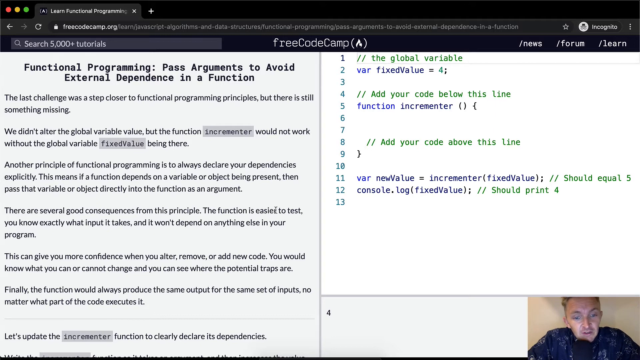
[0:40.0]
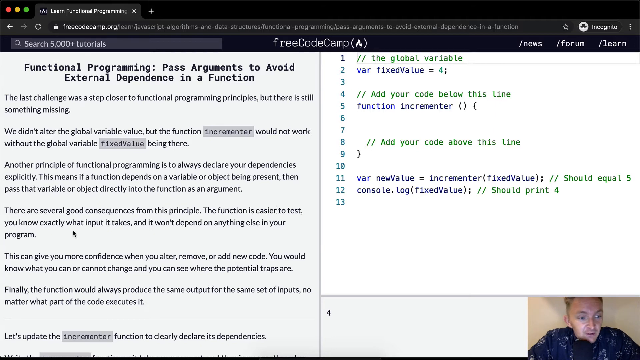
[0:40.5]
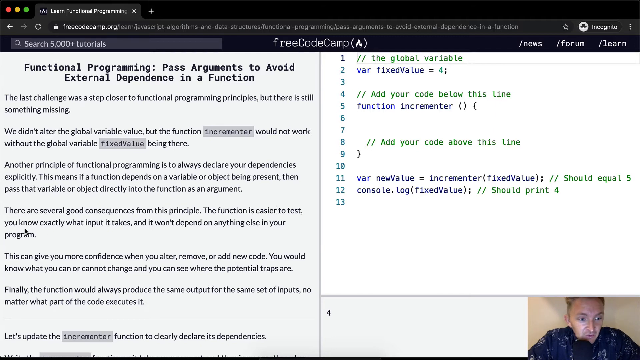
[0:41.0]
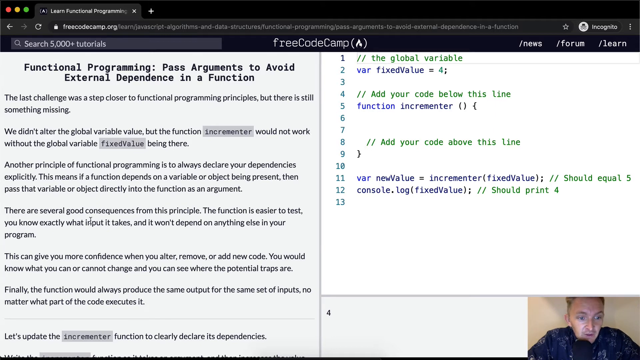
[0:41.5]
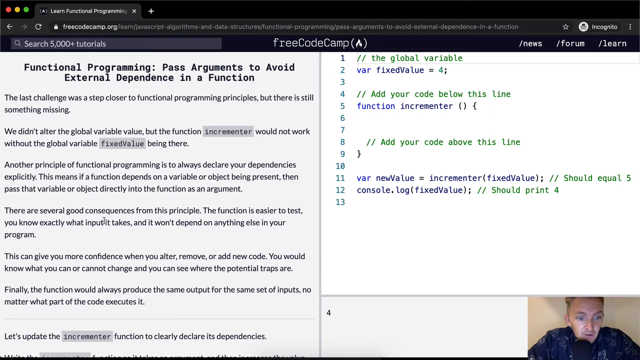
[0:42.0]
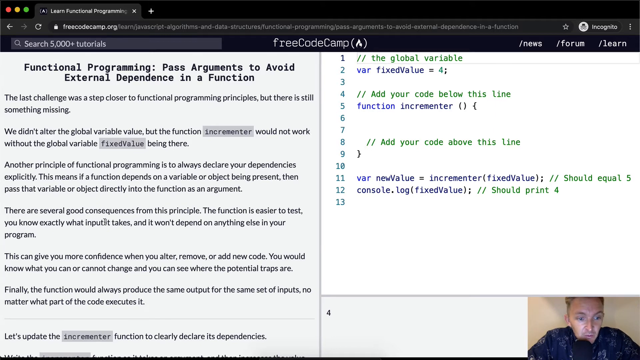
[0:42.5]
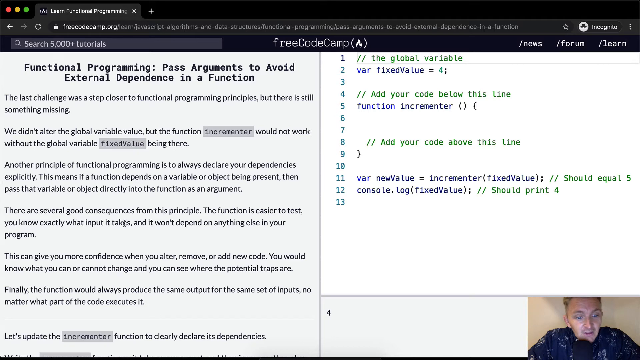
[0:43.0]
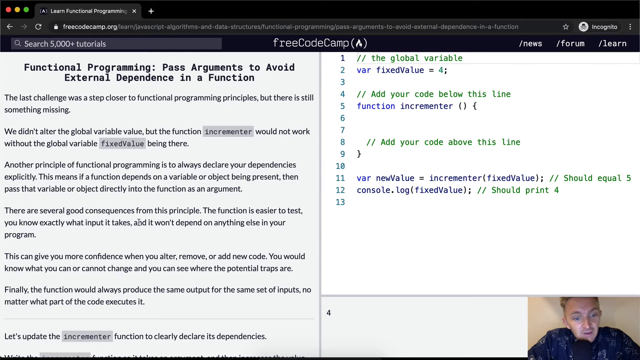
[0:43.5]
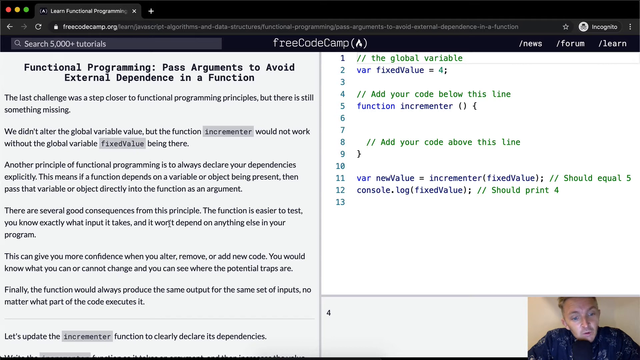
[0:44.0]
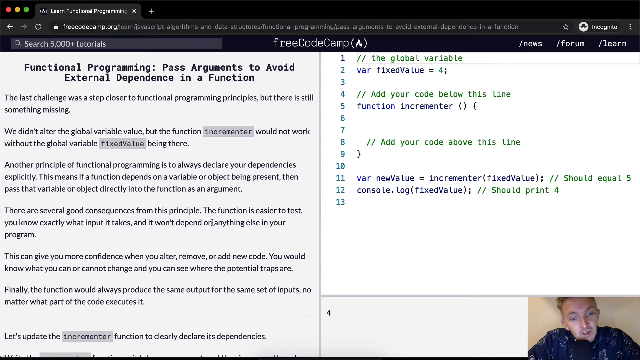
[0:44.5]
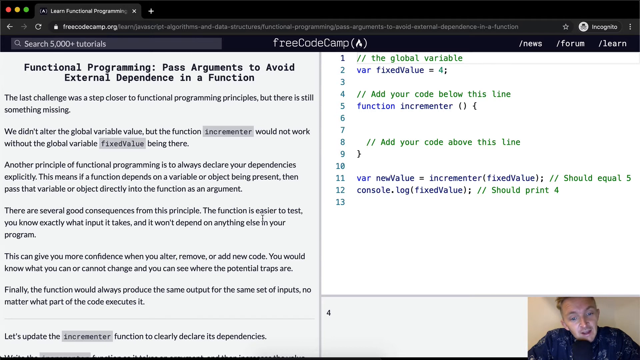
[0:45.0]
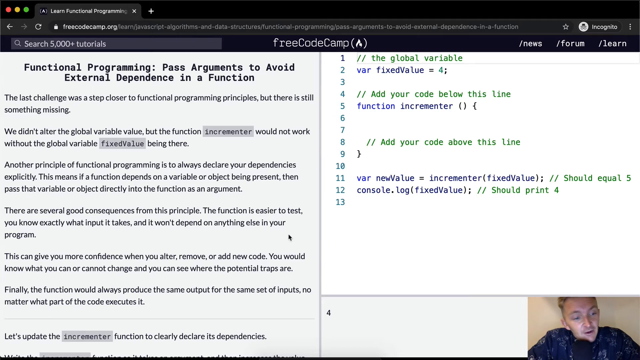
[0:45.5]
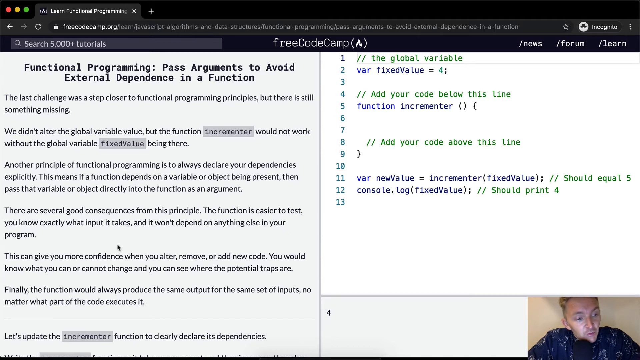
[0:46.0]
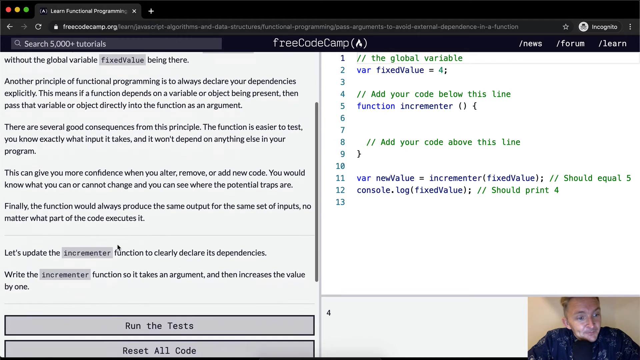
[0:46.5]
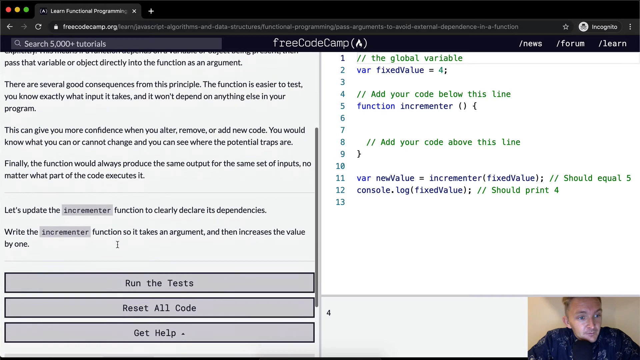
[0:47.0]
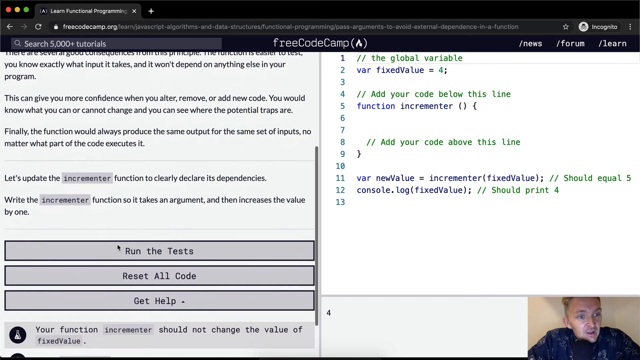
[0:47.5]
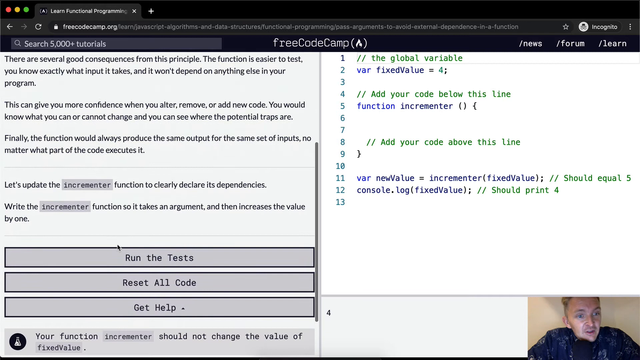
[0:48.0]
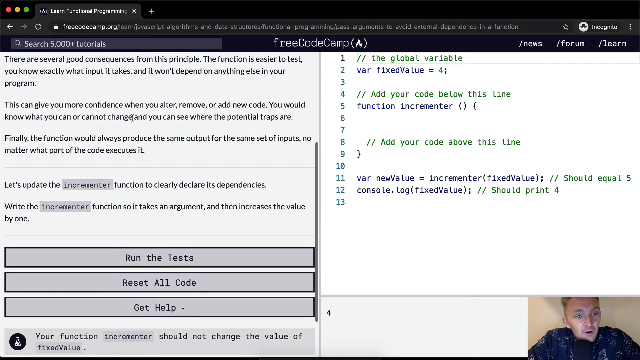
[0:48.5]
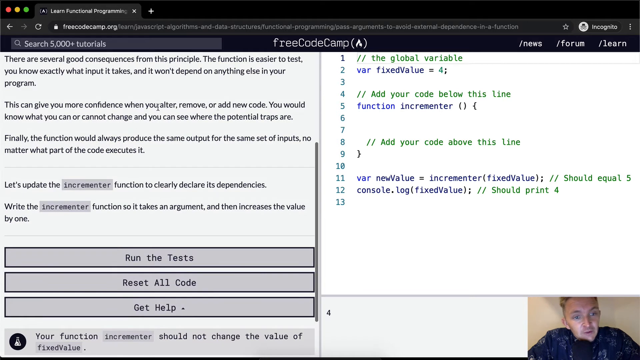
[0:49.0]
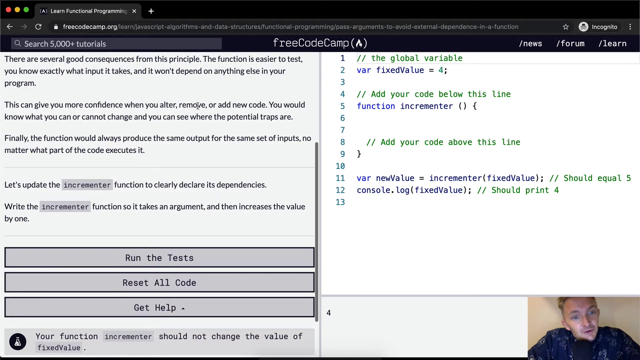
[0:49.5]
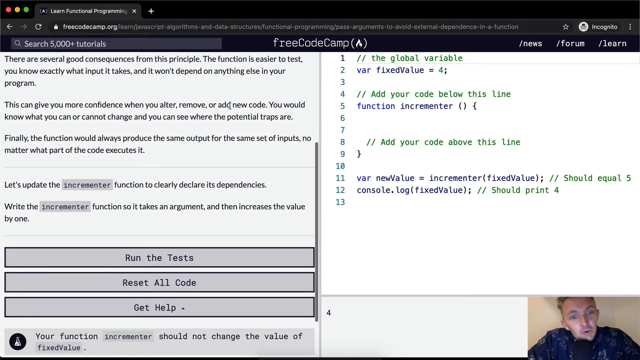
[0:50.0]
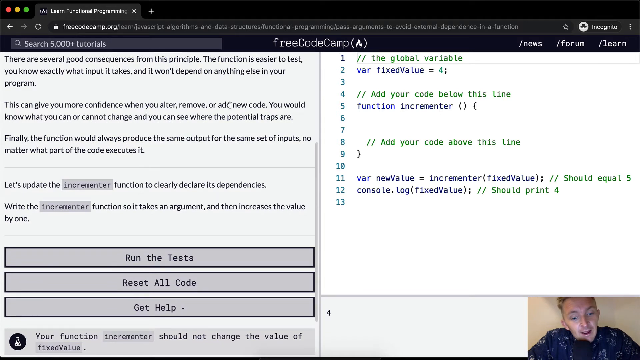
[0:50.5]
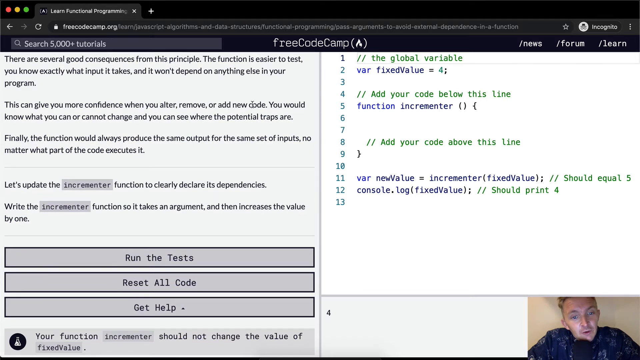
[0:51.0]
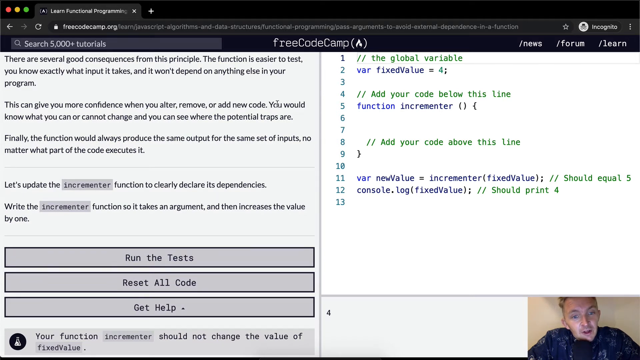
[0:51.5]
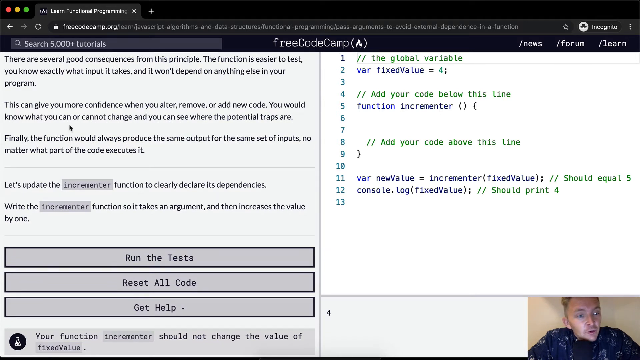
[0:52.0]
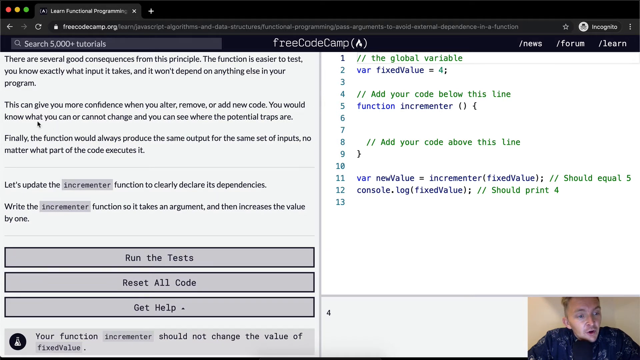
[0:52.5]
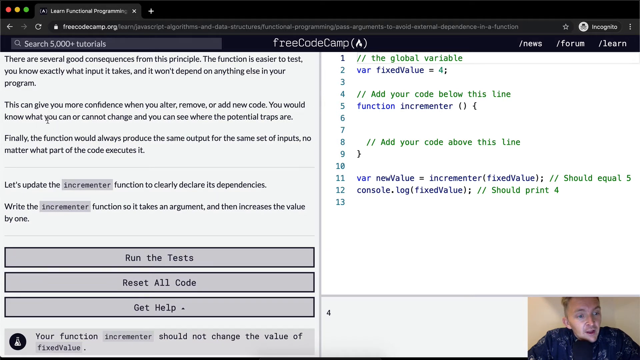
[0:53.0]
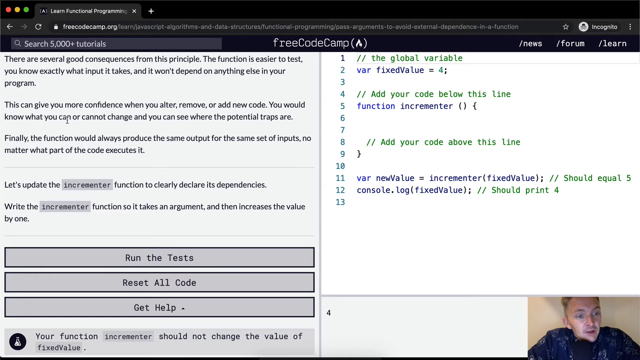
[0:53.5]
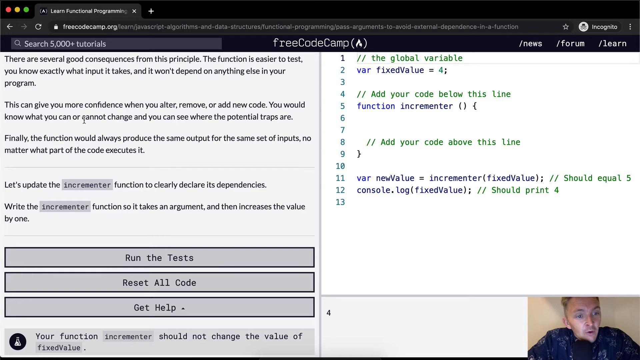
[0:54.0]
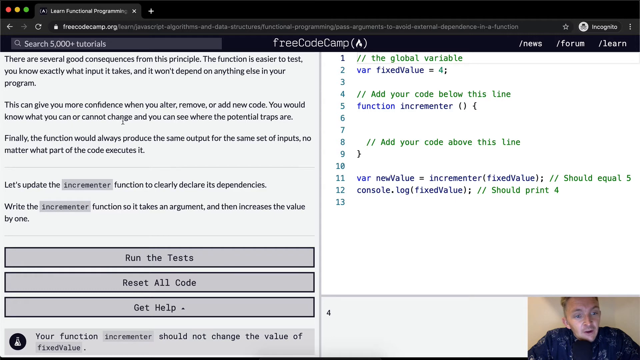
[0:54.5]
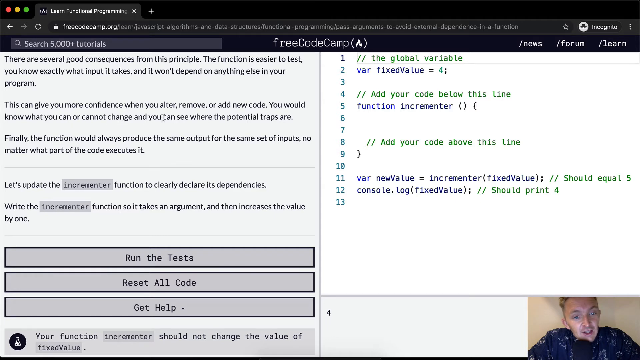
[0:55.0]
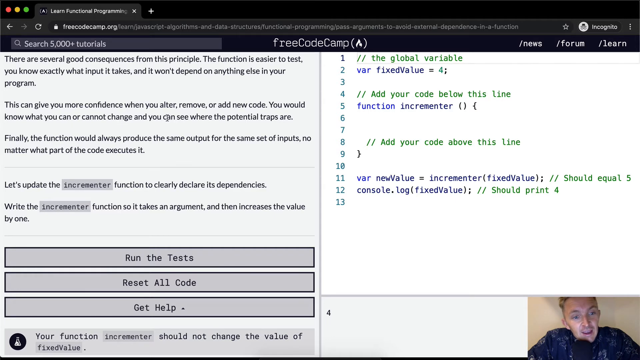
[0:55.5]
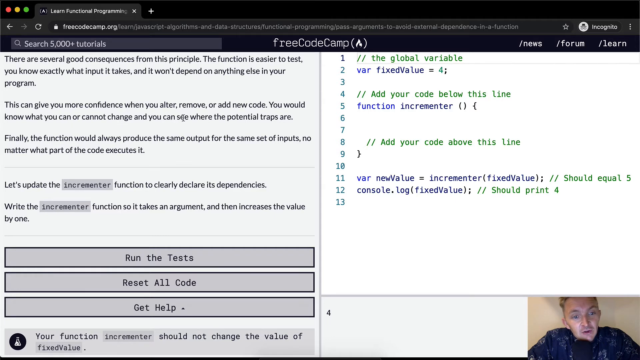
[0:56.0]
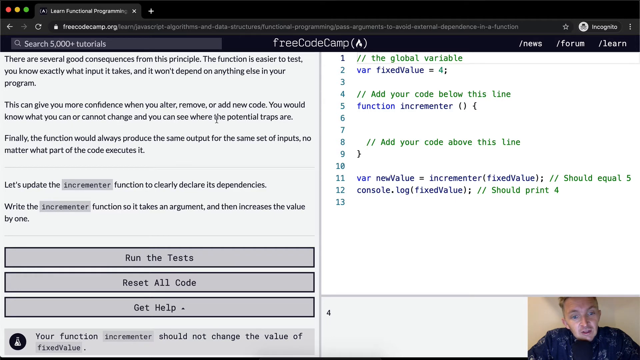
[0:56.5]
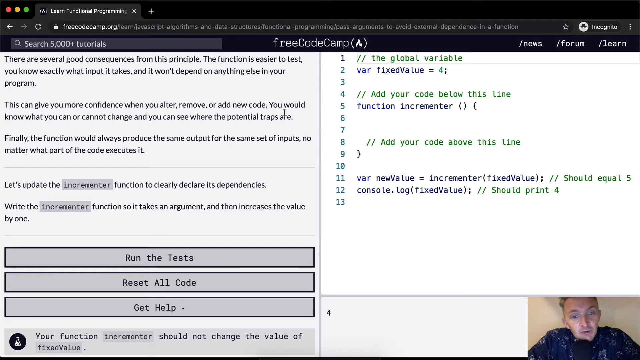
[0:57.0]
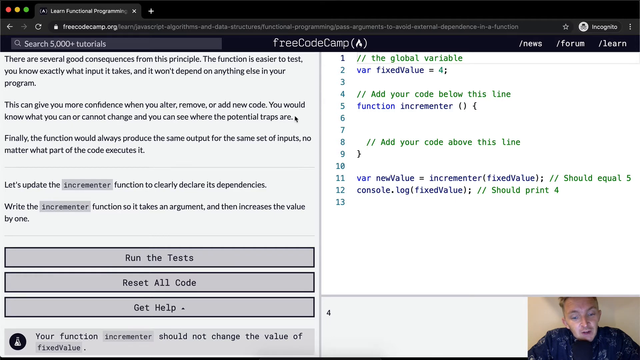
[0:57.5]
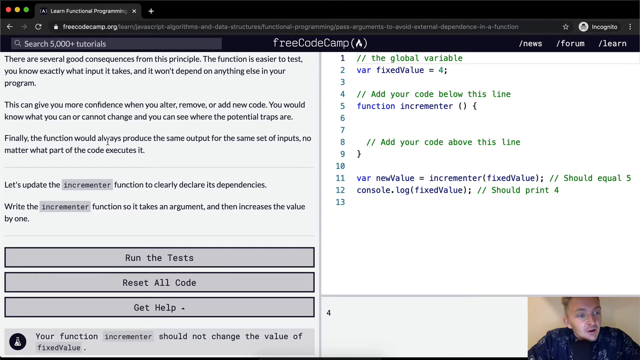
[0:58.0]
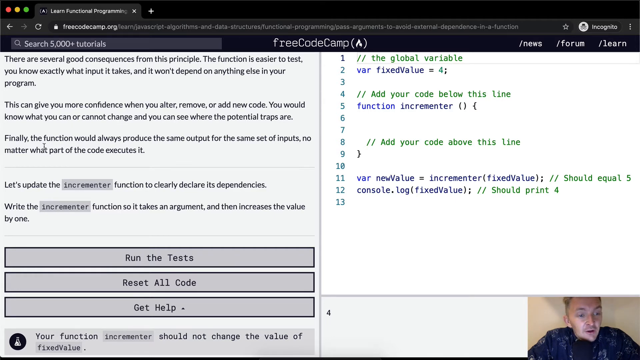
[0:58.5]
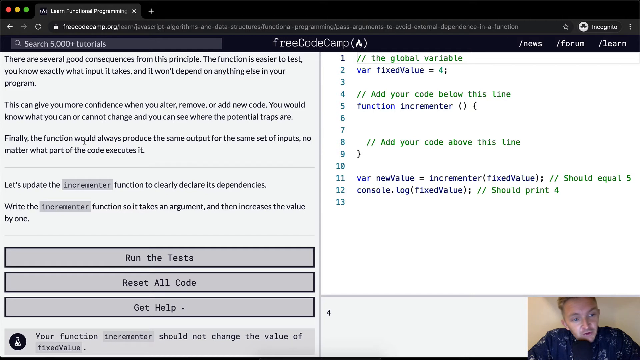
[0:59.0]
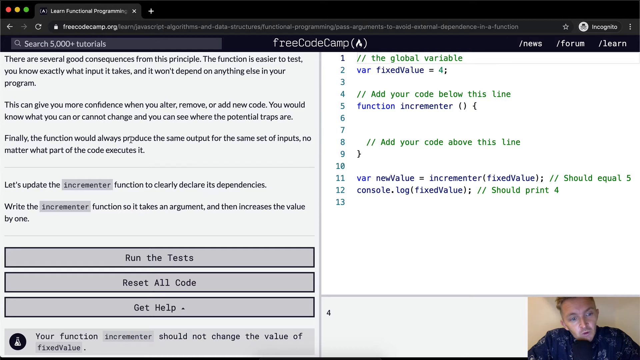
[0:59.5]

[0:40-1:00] The functional programming lesson continues with text reading "this can give you more confidence when you alter, remove, or add a new code. You would know what you can or cannot change and you can see where the potential traps are." Options to run the test, reset all code, or get help are shown. A requirement reads "Your function incrementer should not change the value of the fixed value." The lesson is on free CodeCamp.